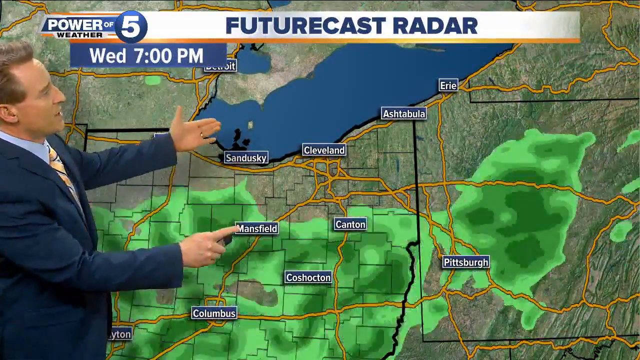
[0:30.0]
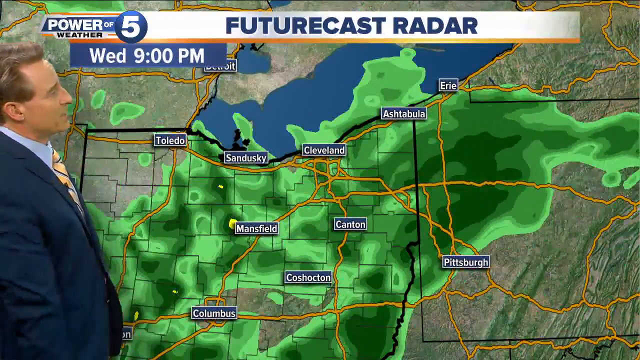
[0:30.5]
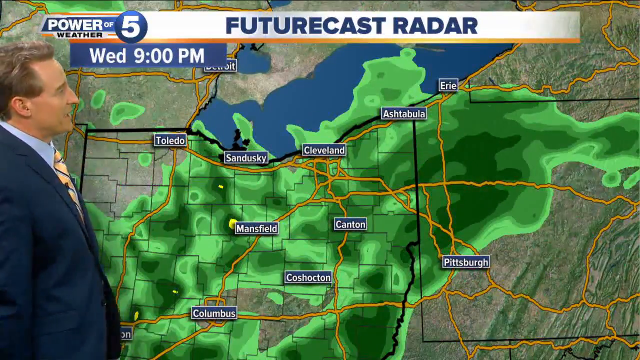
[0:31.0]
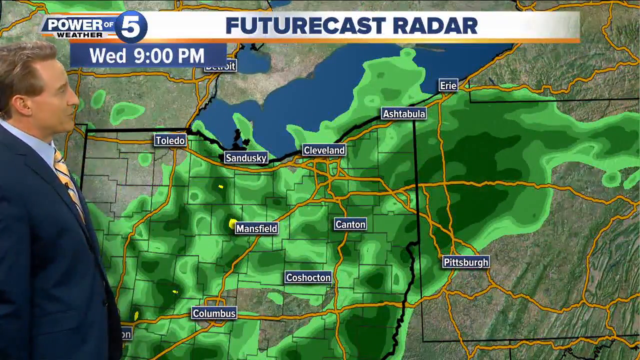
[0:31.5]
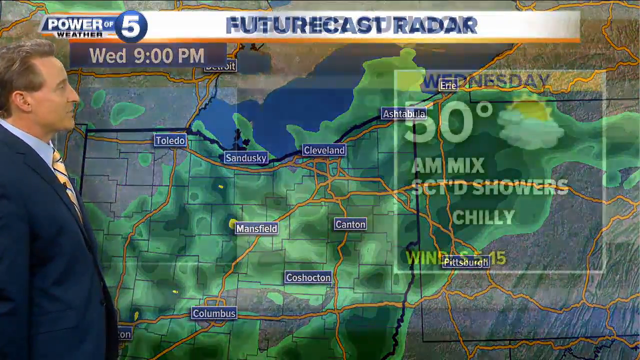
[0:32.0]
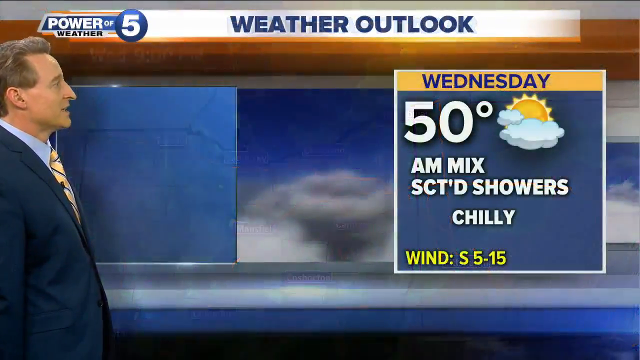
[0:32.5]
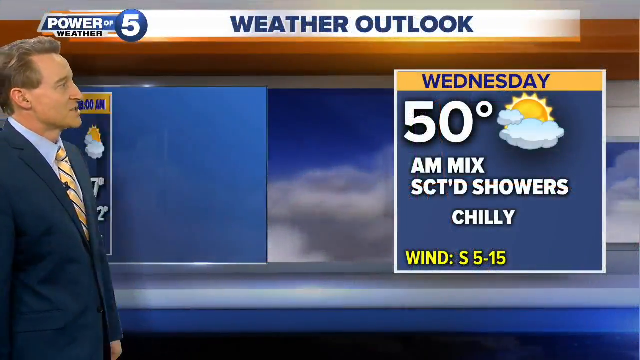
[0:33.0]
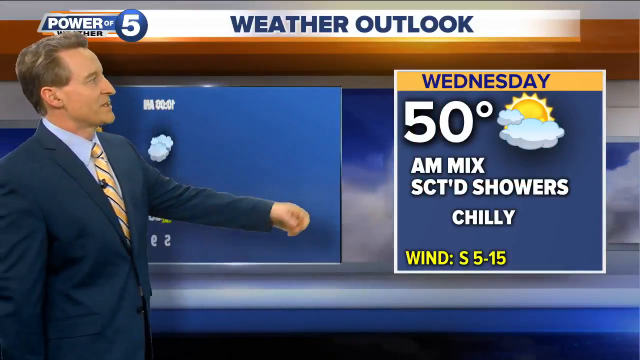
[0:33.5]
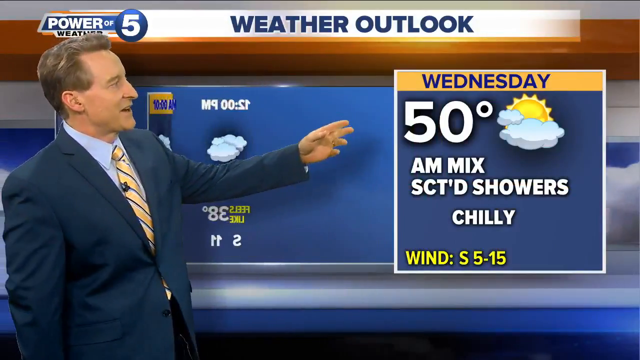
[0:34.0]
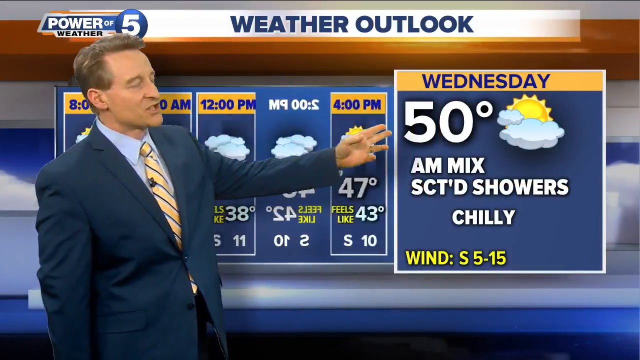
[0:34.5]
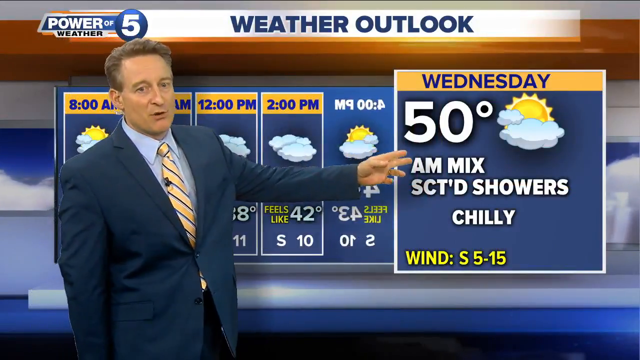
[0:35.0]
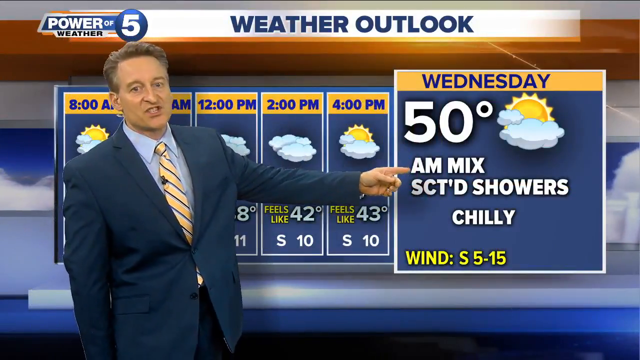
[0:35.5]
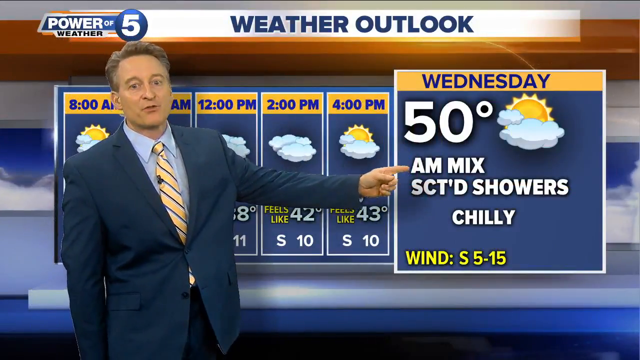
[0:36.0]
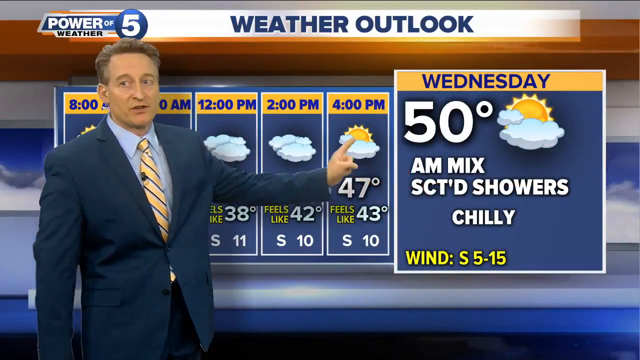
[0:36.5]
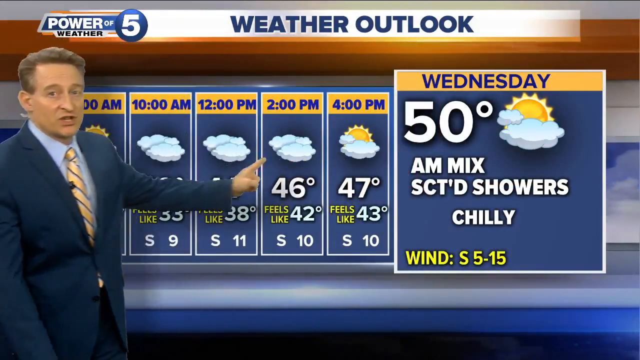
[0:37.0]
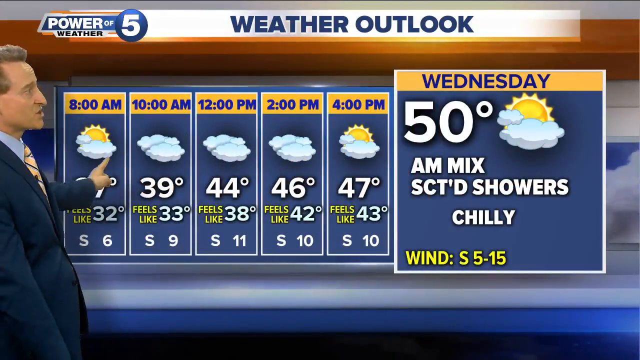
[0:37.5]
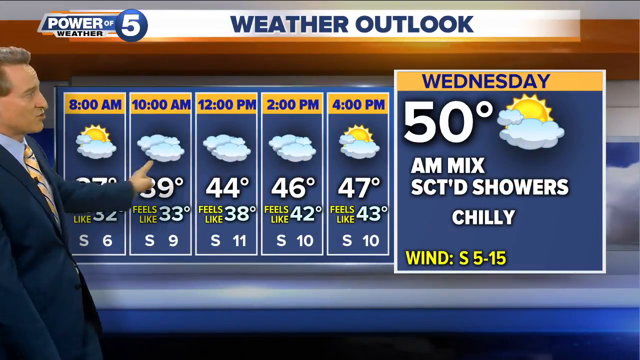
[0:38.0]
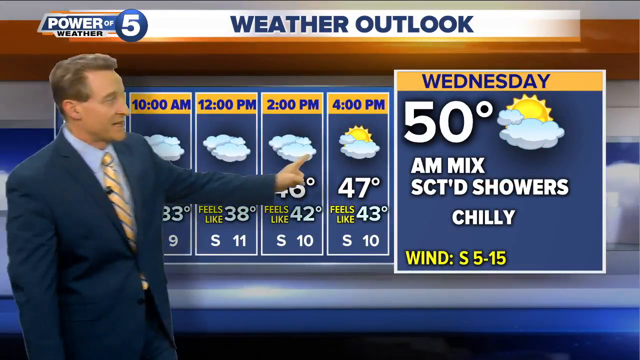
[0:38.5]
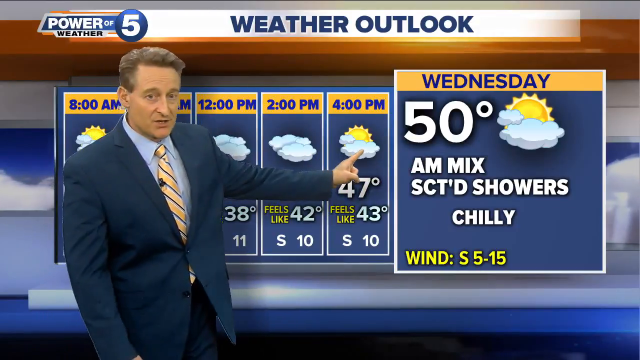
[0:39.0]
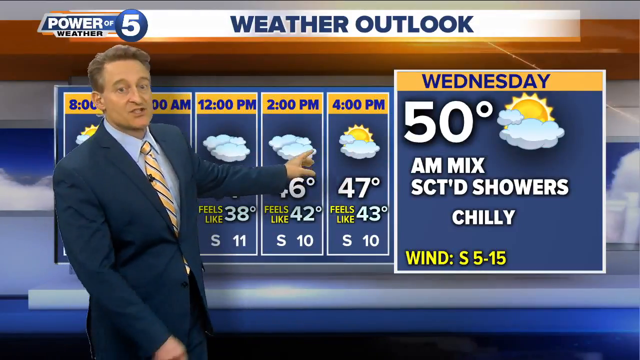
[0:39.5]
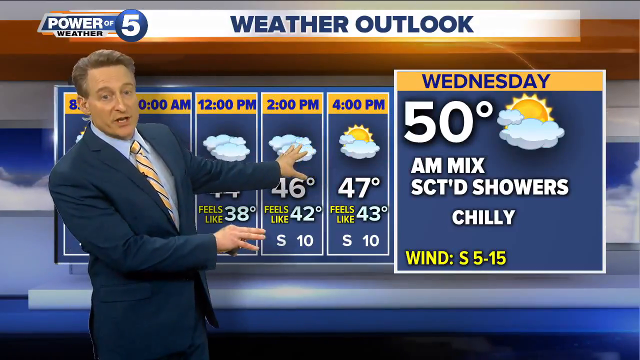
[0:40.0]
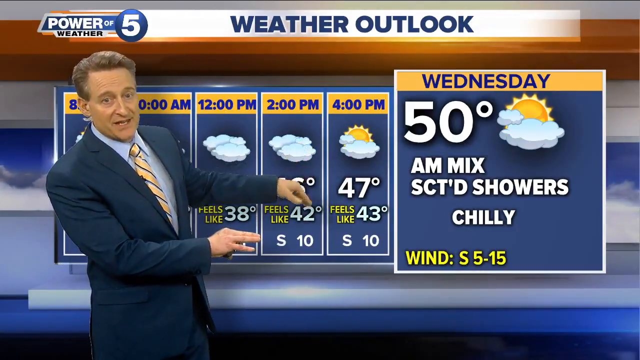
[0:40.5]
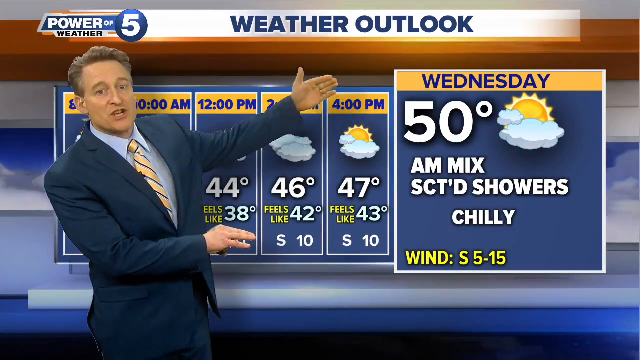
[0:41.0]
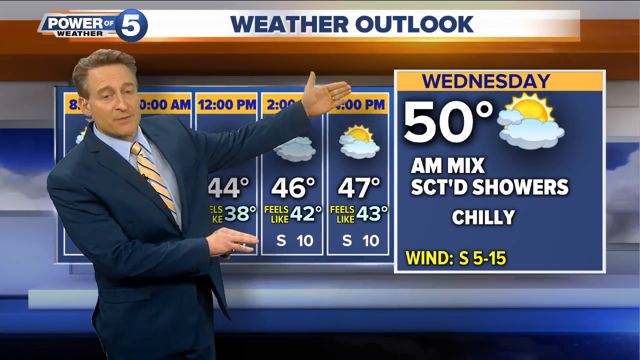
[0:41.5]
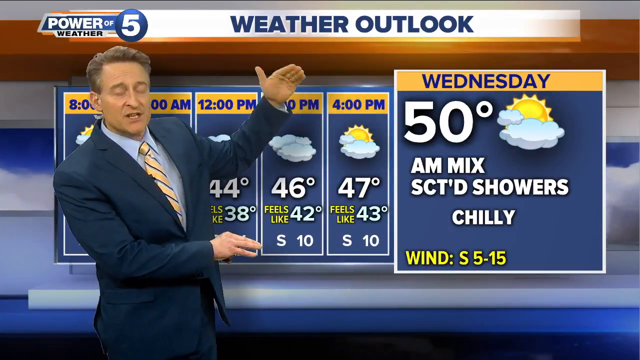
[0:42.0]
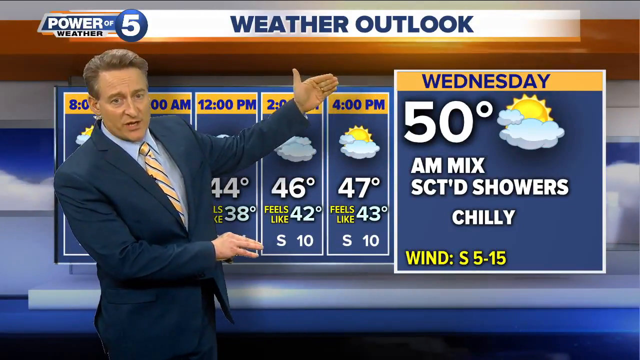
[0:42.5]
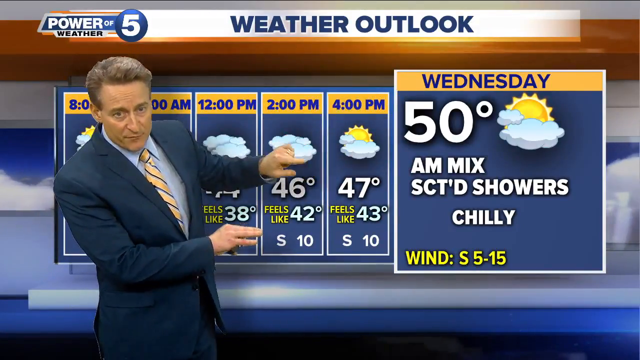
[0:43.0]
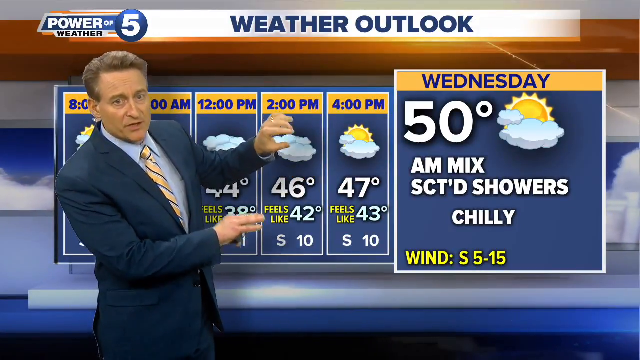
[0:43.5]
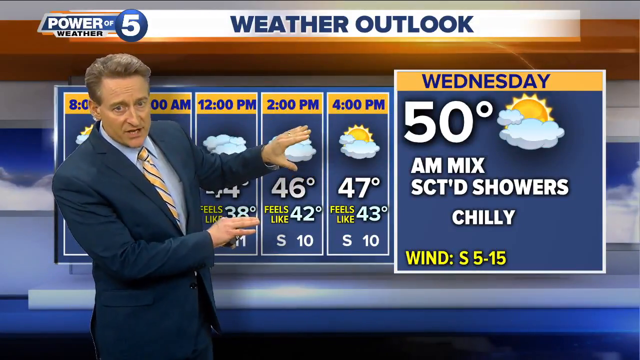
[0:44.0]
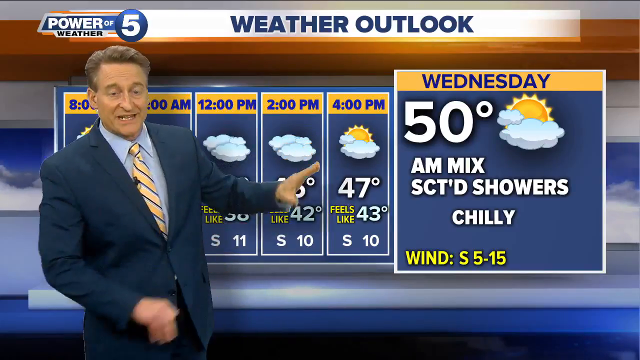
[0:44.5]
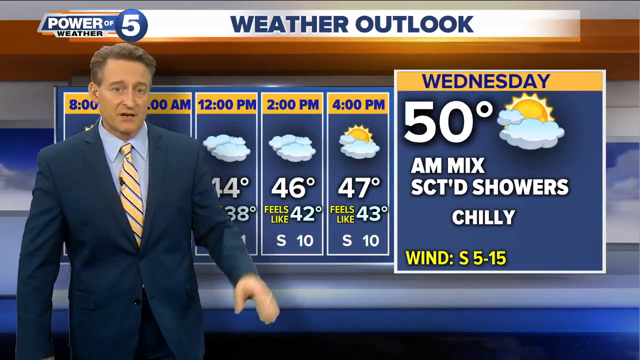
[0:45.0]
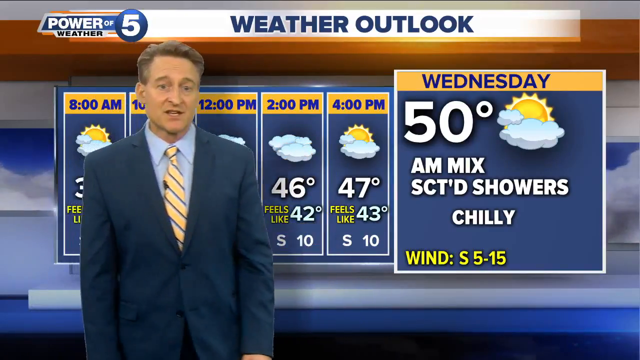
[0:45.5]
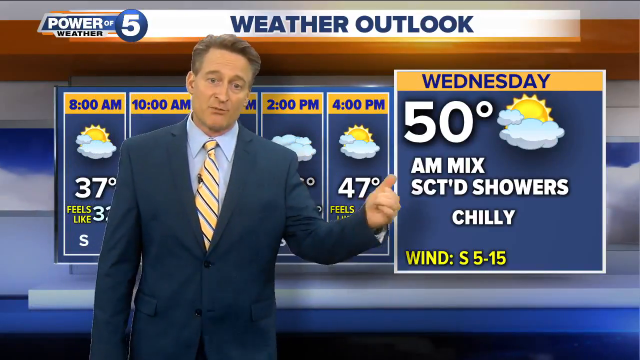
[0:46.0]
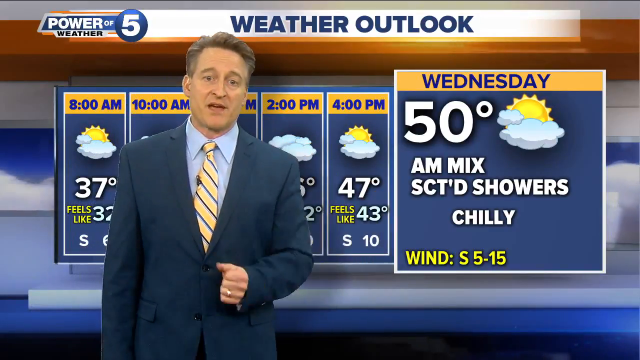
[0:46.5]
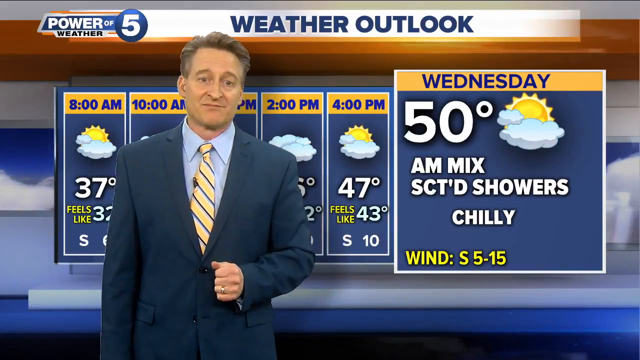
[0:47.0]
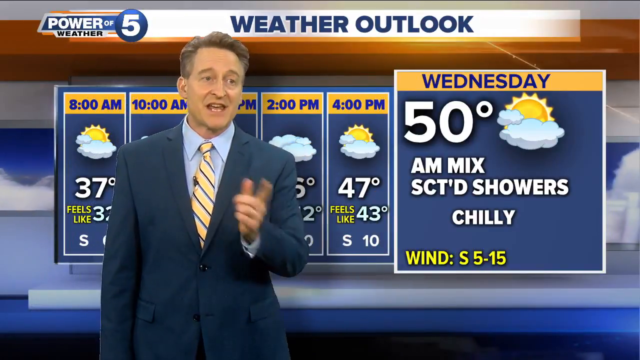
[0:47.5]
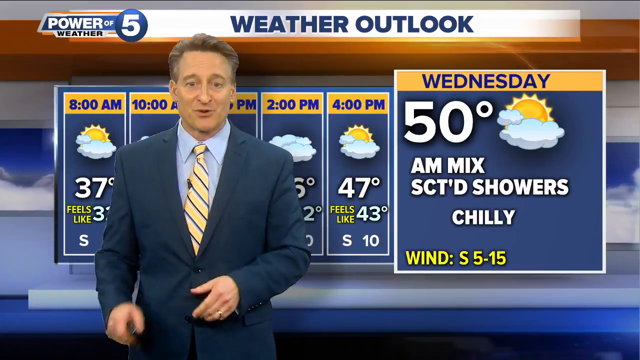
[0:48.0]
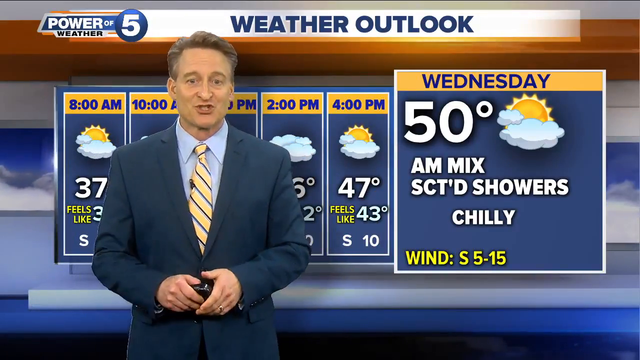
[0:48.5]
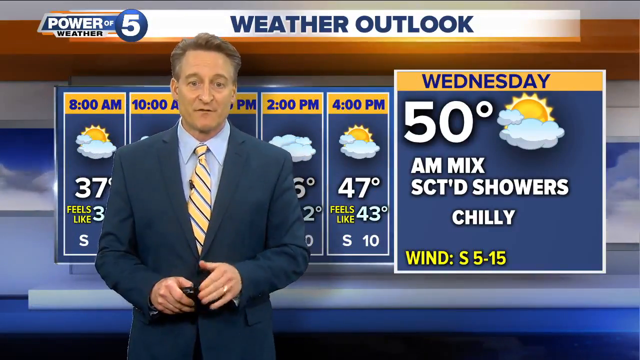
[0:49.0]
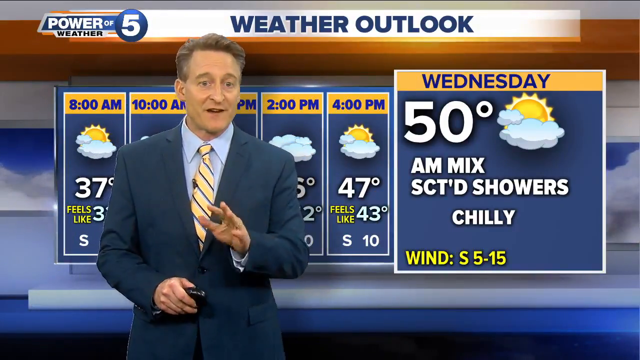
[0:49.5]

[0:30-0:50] A person who most likely is a reporter, wearing a blue suit, a blue shirt and a tie, presents a weather forecast. Text at the top of the screen reads "Power of Weather 5", "FutureCast Radar" and "Wednesday 9.00pm". The map in the background shows places such as Toledo, Sandusky, Cleveland, Mansfield, Canton, Coshocton, Columbus, Pittsburgh, Ashtabula and Erie. The next screen is headed "Weather Outlook" and shows the weather for different times of the day: 8 a.m., 10 a.m., 12 p.m., 2 p.m. and 4 p.m. At 4 p.m. it reads "feels like 43 degrees". Text also shows Wednesday at 50 degrees, a mix of showers, "chilly", and wind "S 5 to 15".